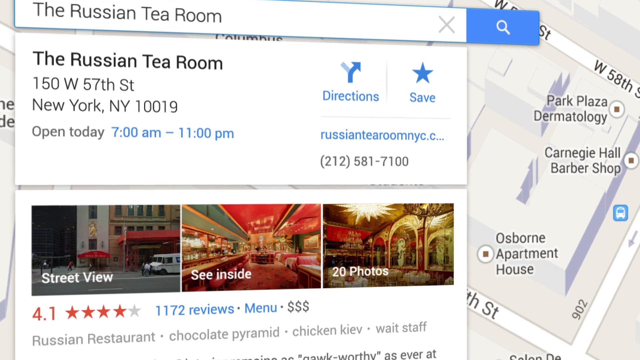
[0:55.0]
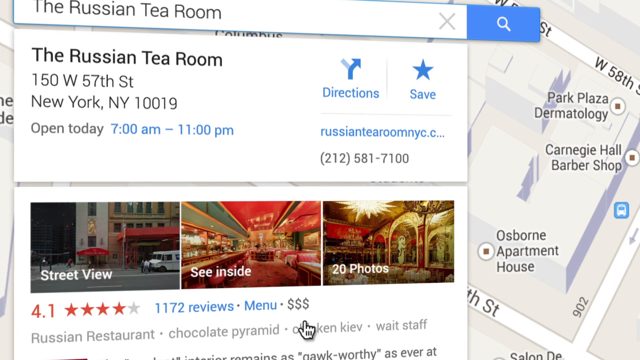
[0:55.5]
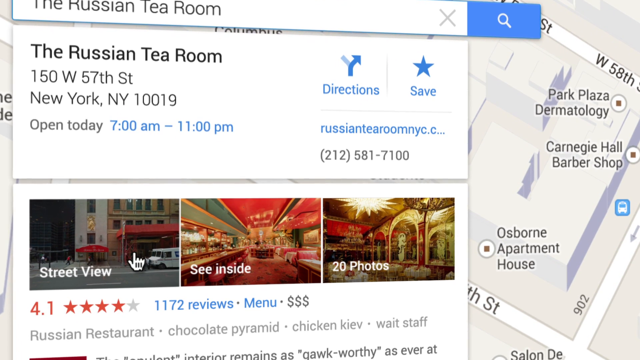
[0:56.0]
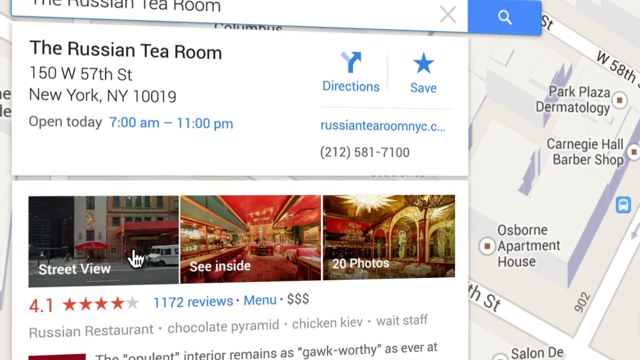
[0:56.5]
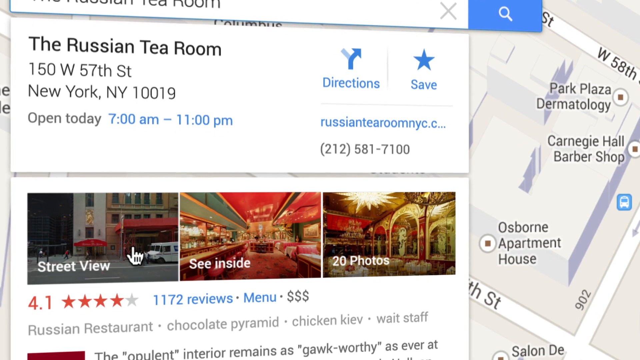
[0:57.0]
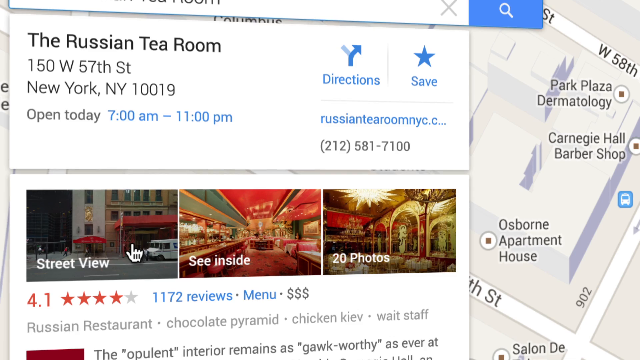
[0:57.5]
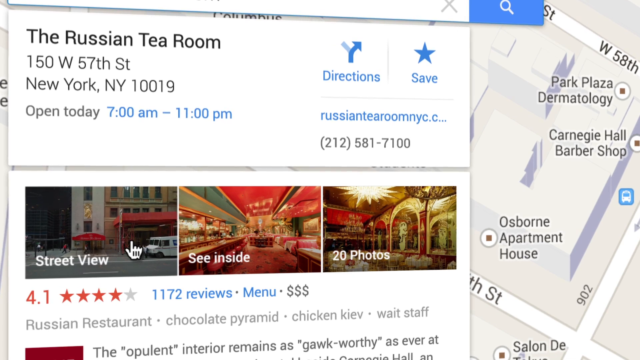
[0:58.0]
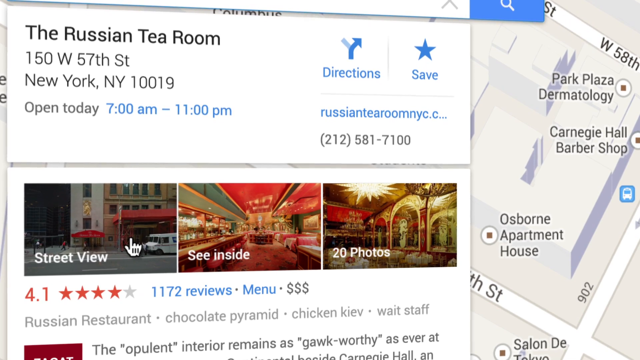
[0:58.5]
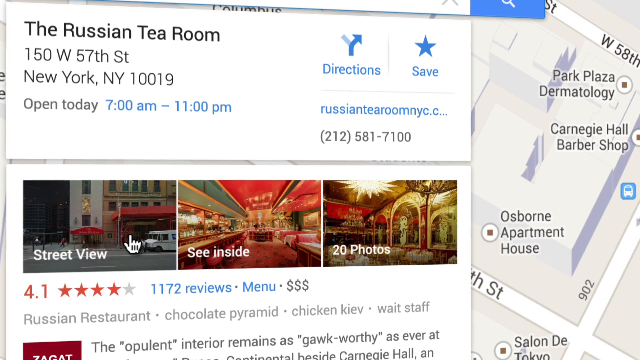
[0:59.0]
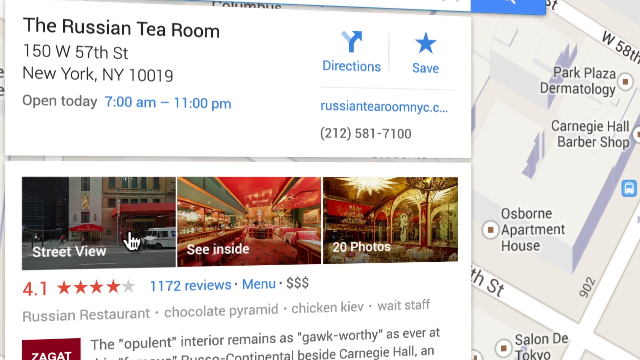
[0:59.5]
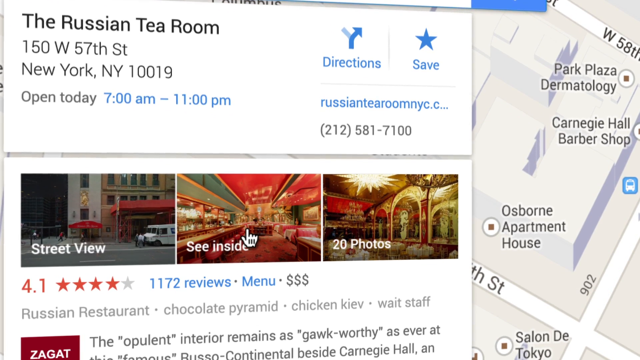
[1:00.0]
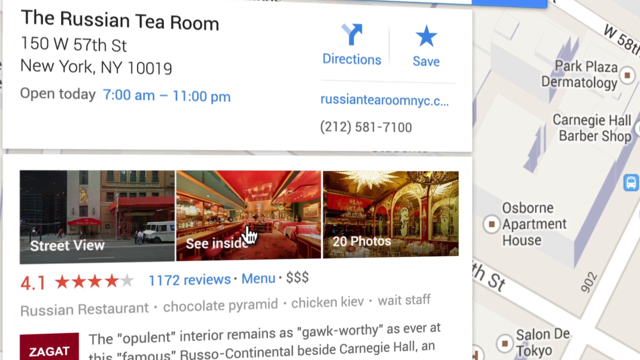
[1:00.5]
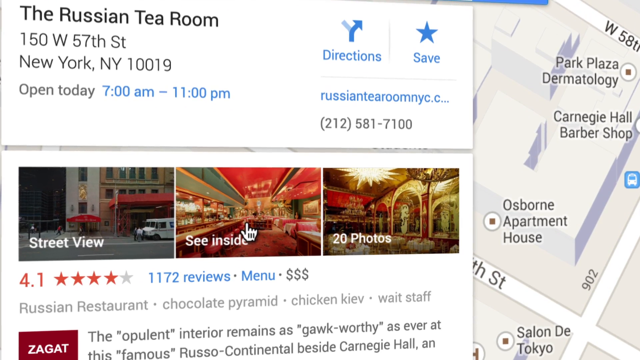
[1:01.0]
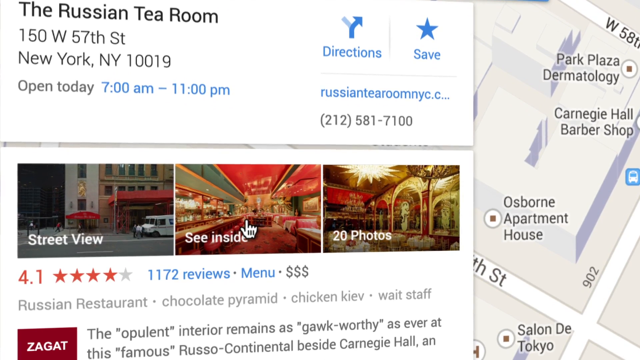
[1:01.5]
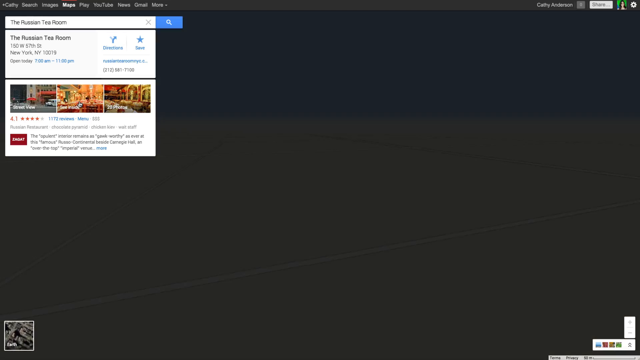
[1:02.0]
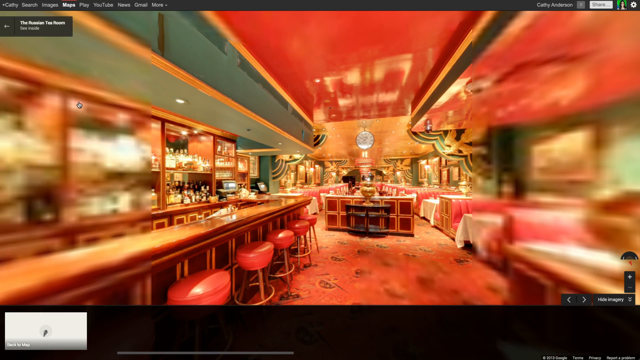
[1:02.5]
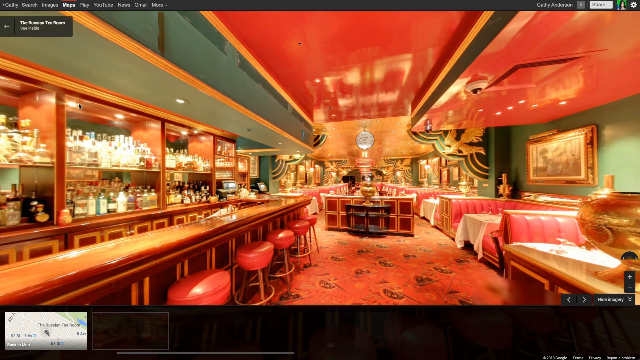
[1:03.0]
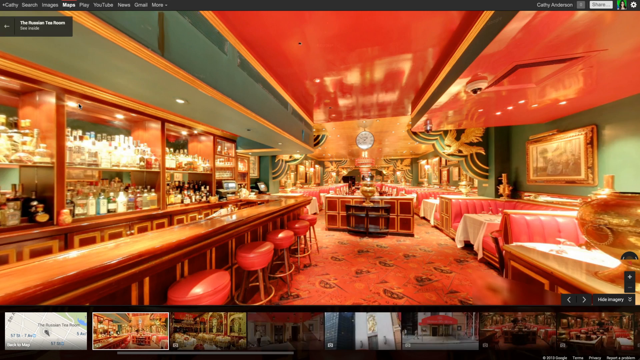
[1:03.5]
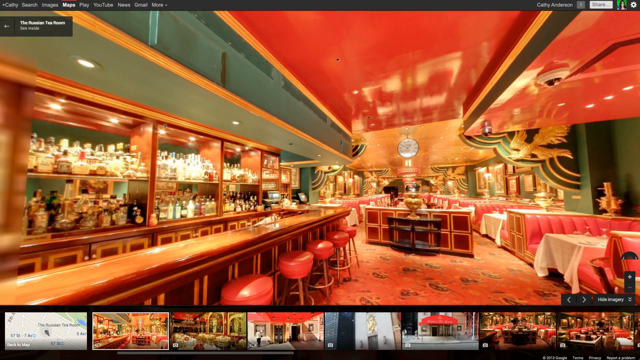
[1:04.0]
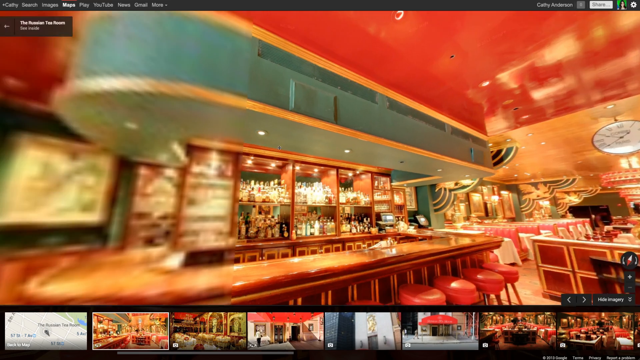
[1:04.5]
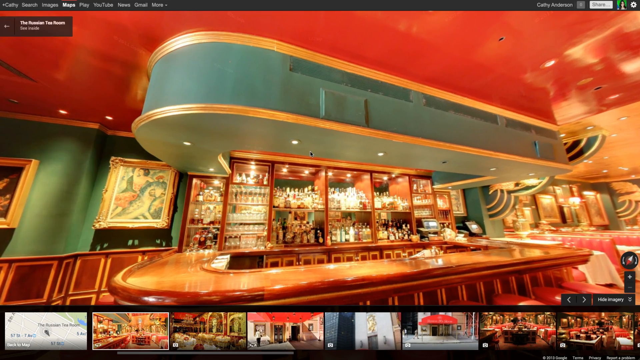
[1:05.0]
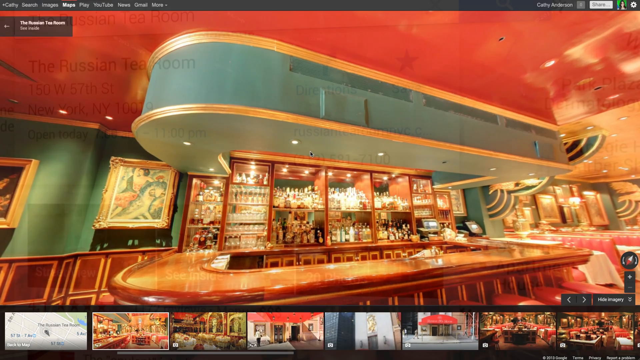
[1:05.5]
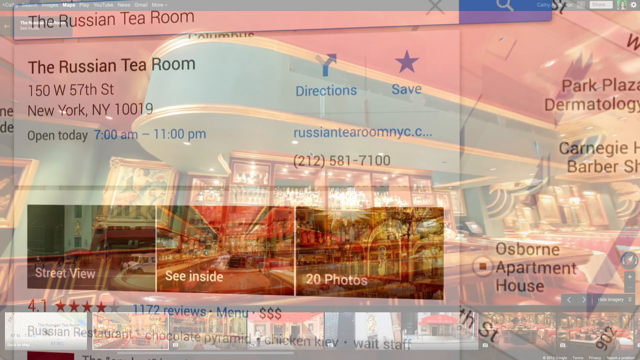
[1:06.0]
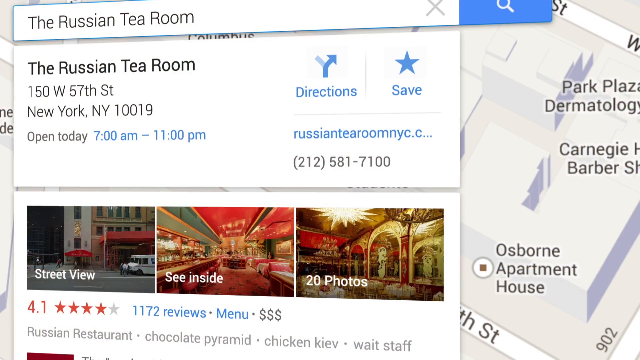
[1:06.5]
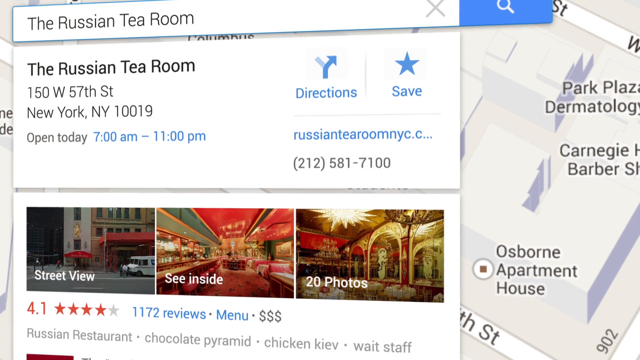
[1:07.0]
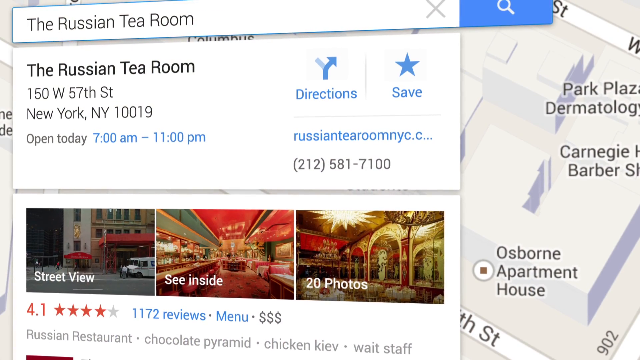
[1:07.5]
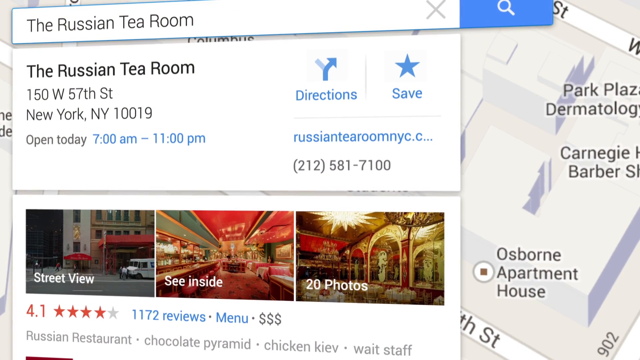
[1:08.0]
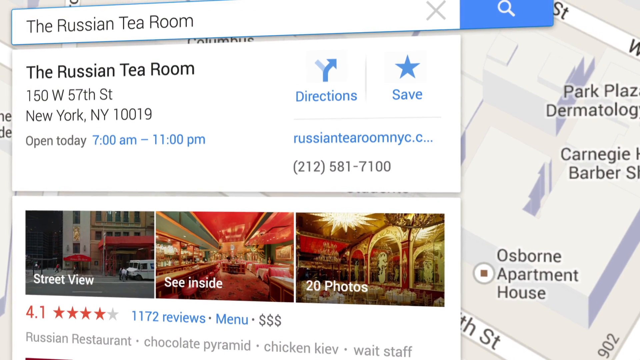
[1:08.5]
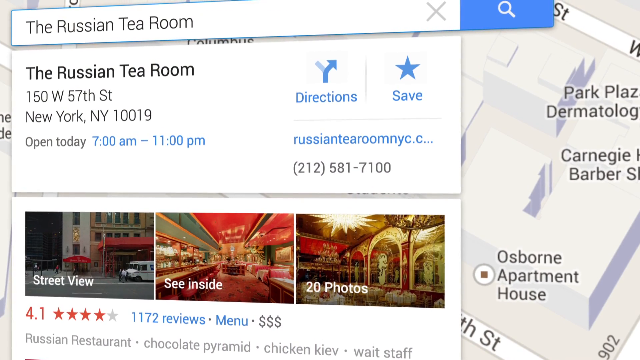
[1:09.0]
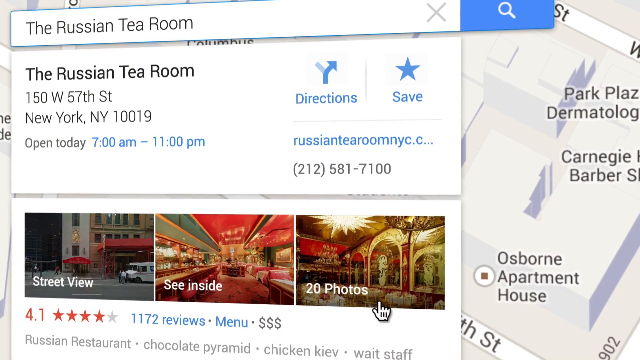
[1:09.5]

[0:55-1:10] Someone clicks on directions, and the mouse moves over Street View and then over to See Inside, which they click. The view moves inside the restaurant, showing a bar, the Russian Tea Room, red carpet with decorations, booths with red seats, and red bar stools up near the bar.